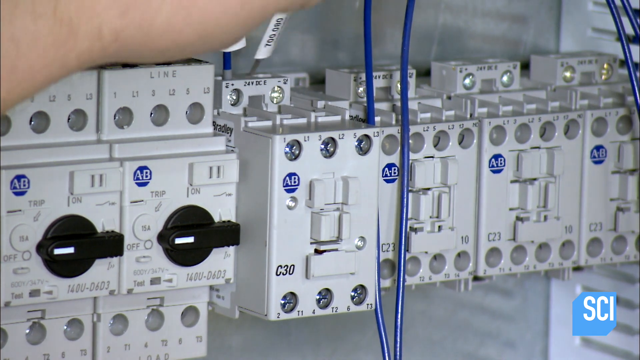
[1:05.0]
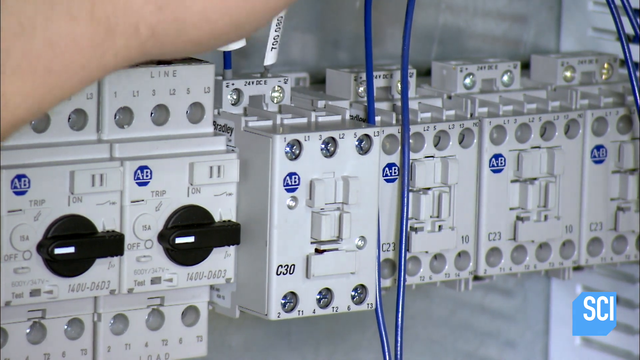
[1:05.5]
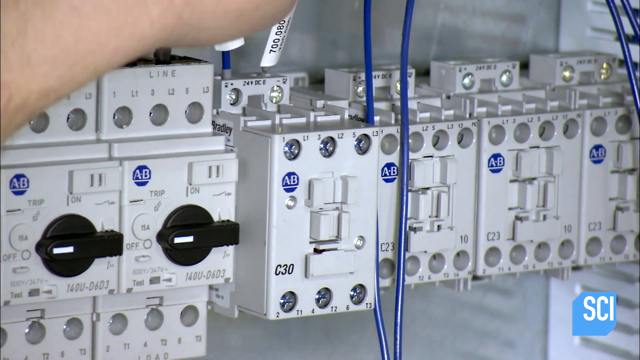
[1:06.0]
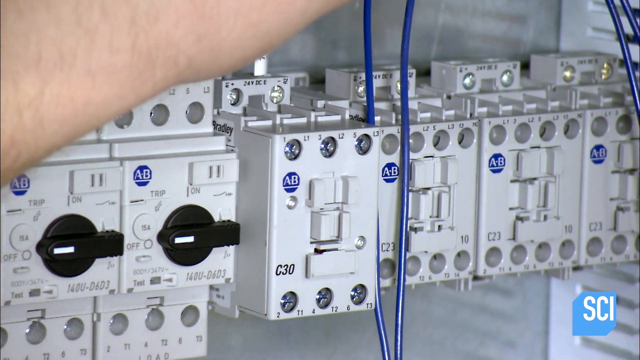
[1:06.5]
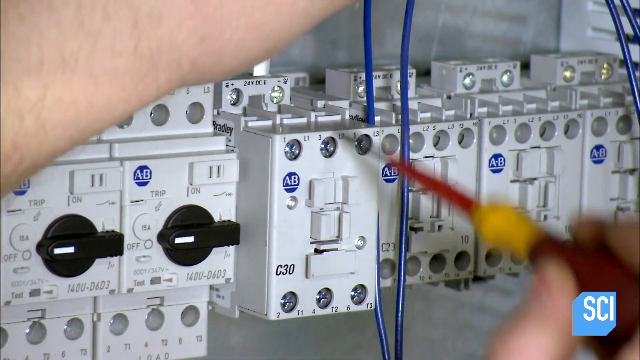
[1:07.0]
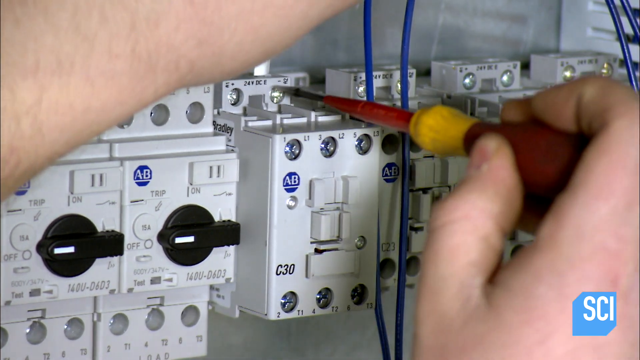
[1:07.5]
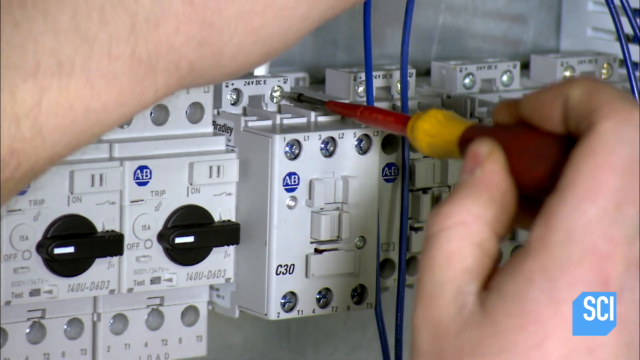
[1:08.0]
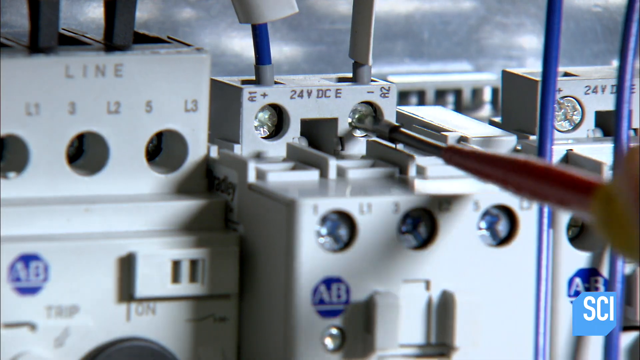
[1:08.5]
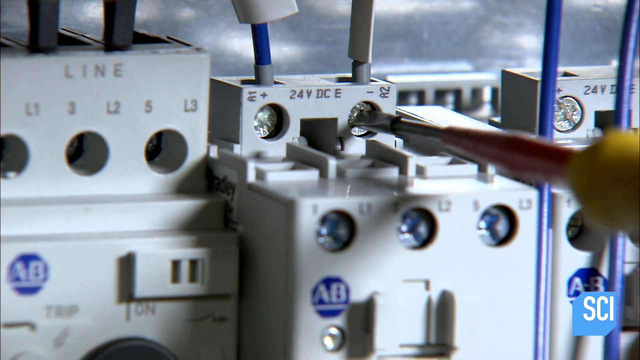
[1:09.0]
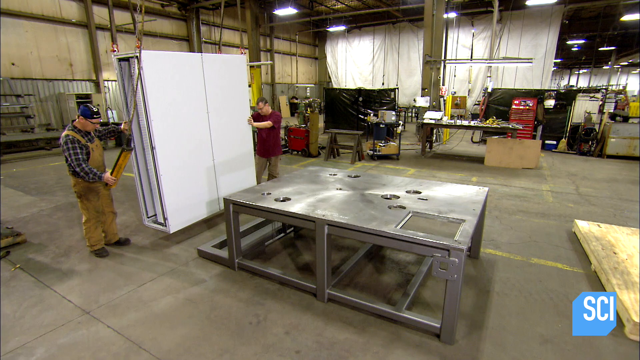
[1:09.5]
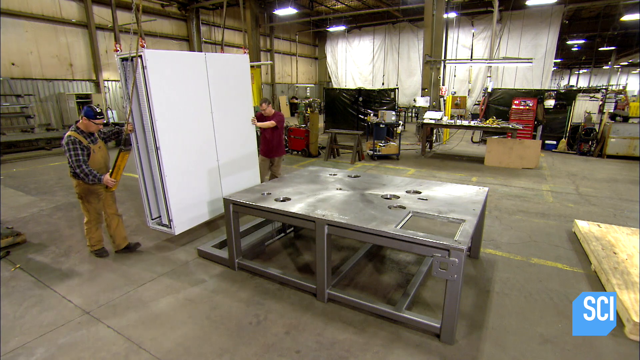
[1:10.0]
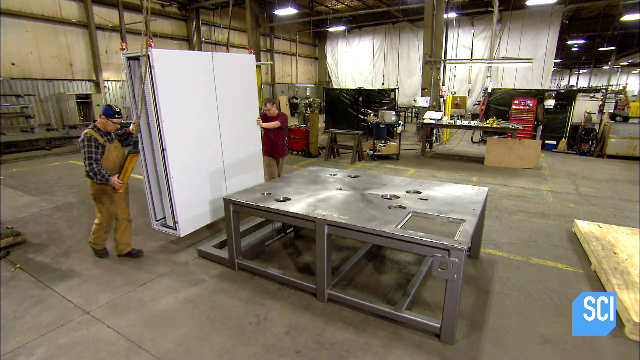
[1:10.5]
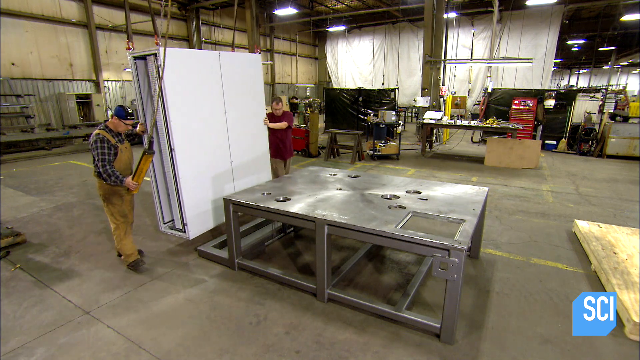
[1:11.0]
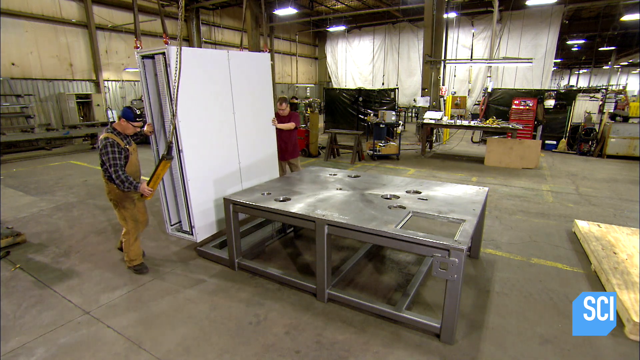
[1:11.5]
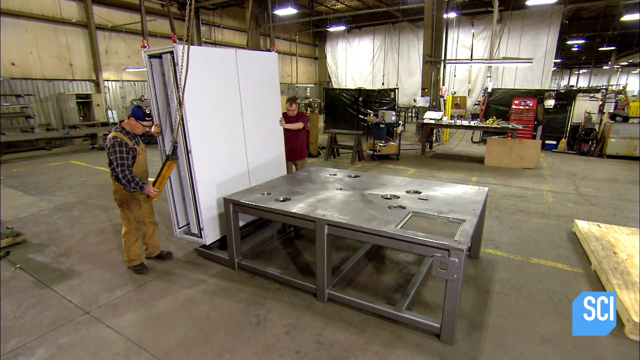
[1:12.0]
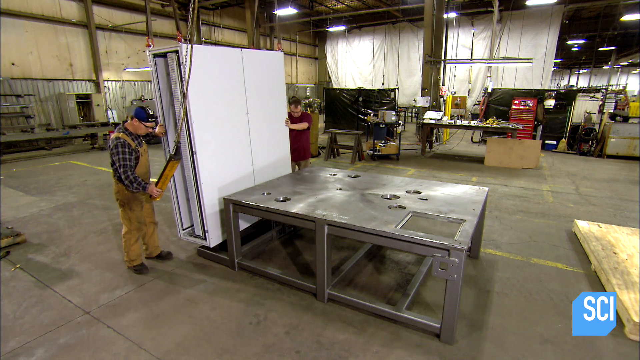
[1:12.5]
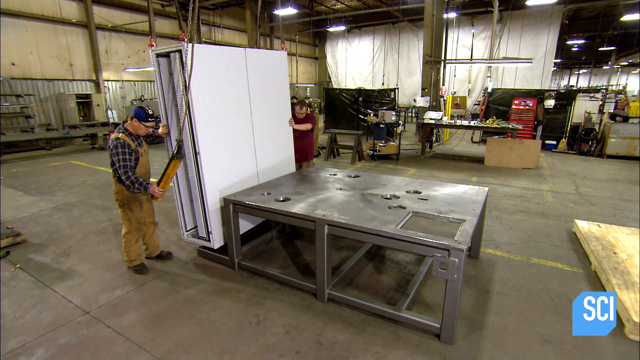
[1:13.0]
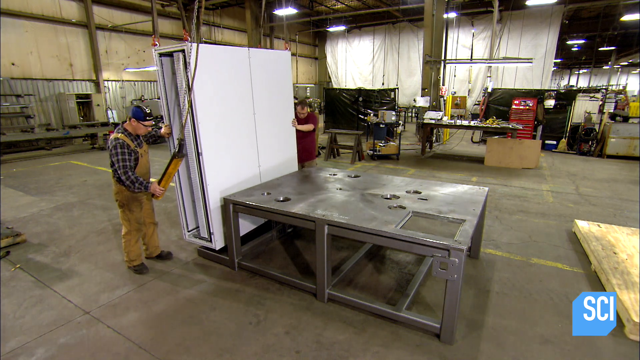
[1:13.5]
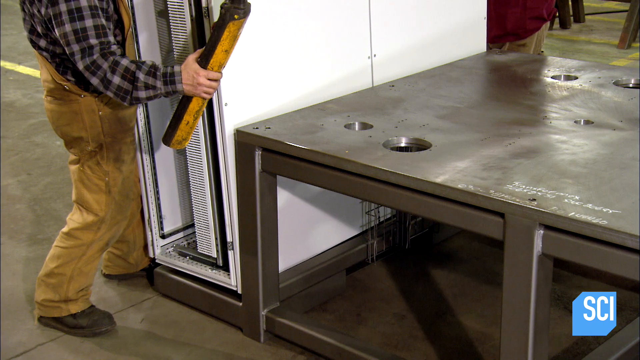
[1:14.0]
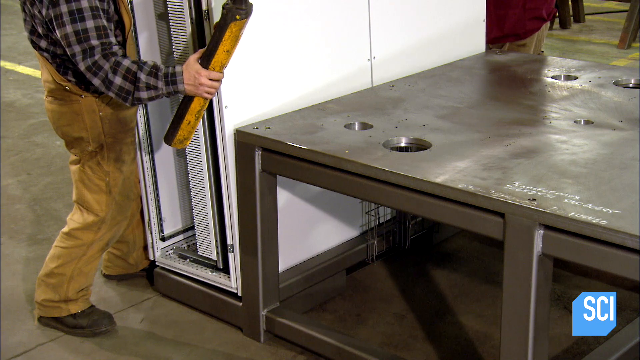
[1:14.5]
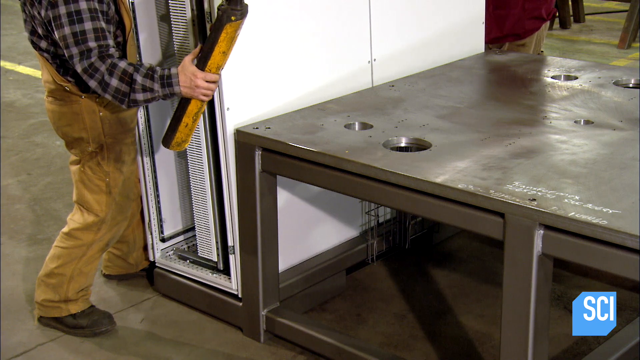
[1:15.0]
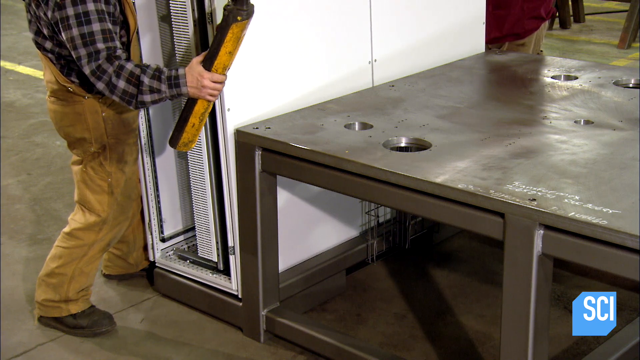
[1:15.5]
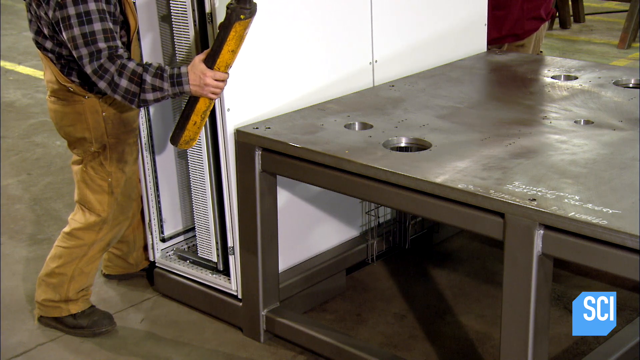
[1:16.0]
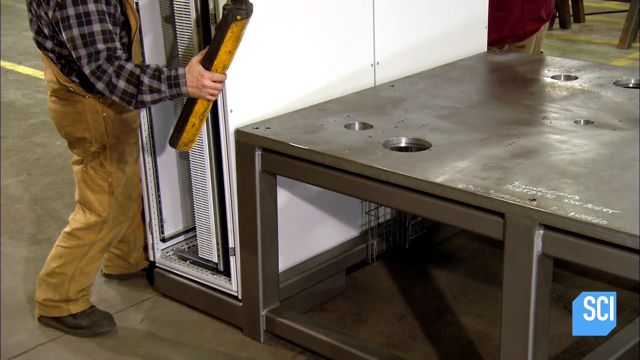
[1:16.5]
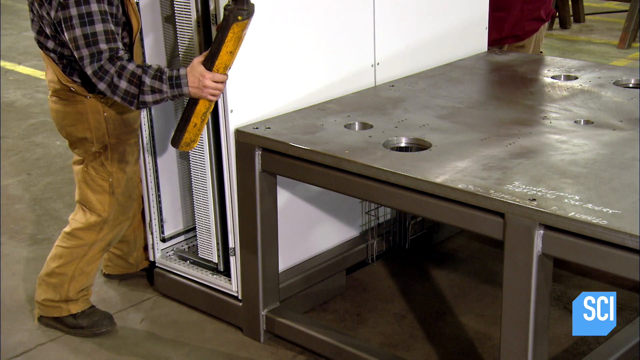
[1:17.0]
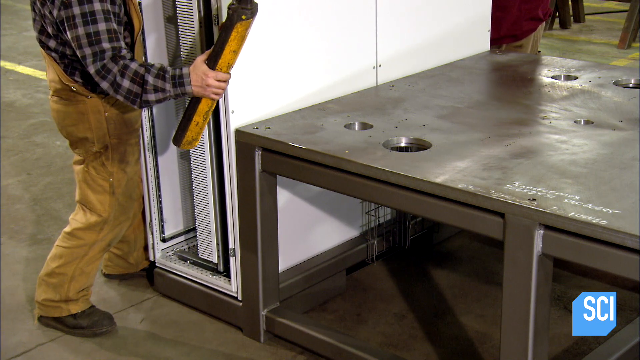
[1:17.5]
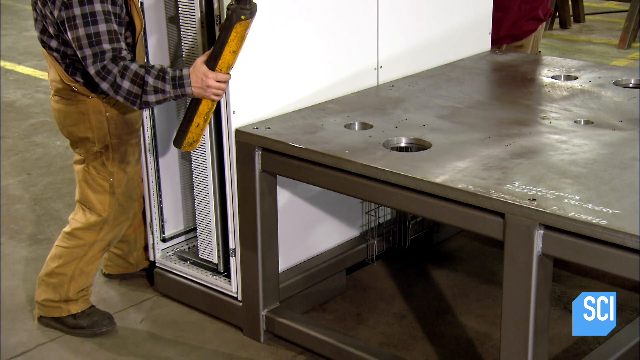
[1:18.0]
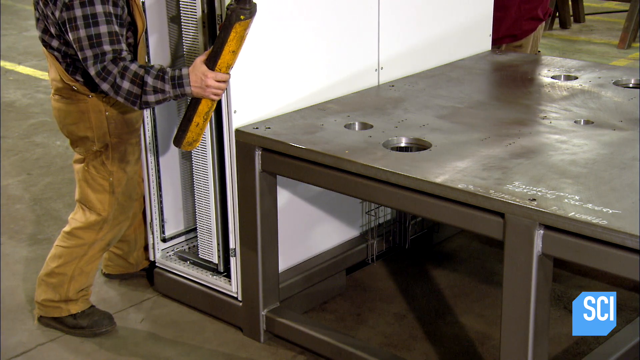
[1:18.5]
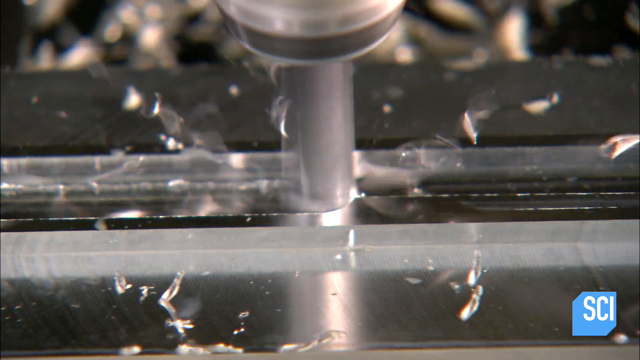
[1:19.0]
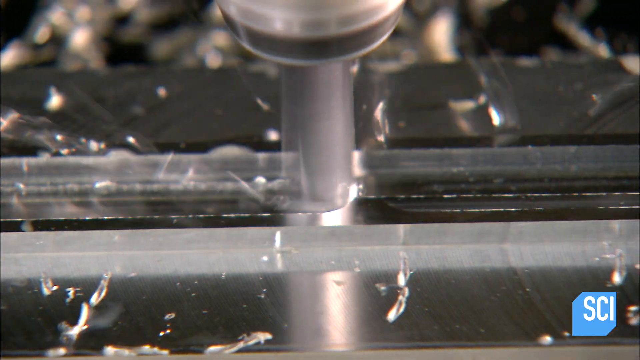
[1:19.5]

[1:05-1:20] A man who looks like the welder and another man move a large white box over to the metal frame that was just put together, which looks sort of like a table. They are still in the same warehouse. The man holds a control in his hand that helps him guide the large box toward the metal frame. He wears brown overalls, a blue checkered flannel jacket, and boots. The other man wears a red shirt. A man is also shown doing more wiring inside the box, putting a blue wire with exposed metal parts down into something and using a screwdriver to tighten it into place.